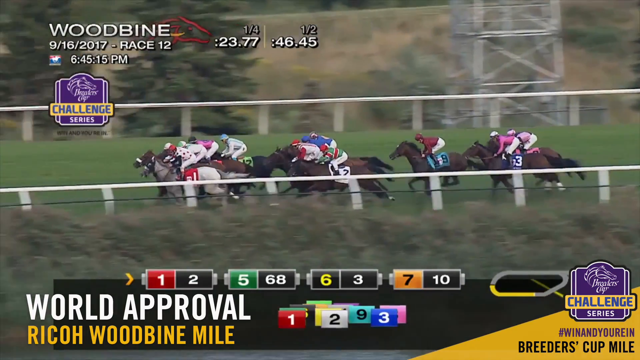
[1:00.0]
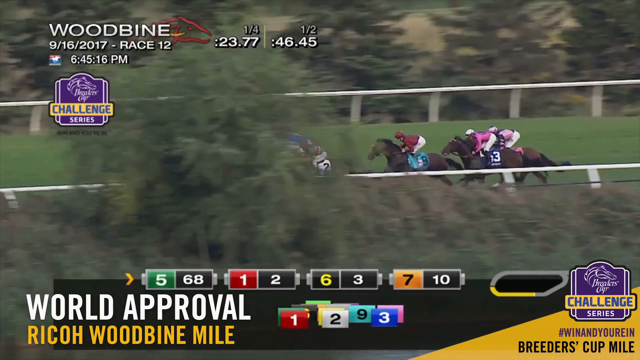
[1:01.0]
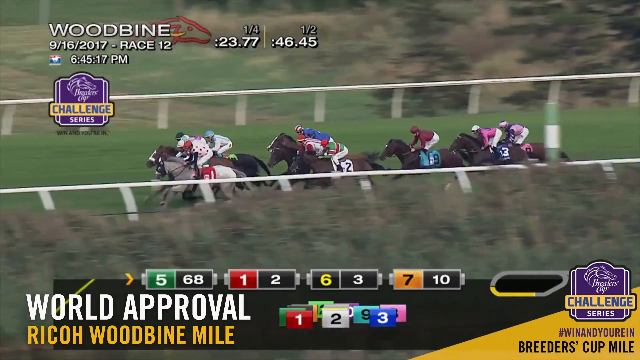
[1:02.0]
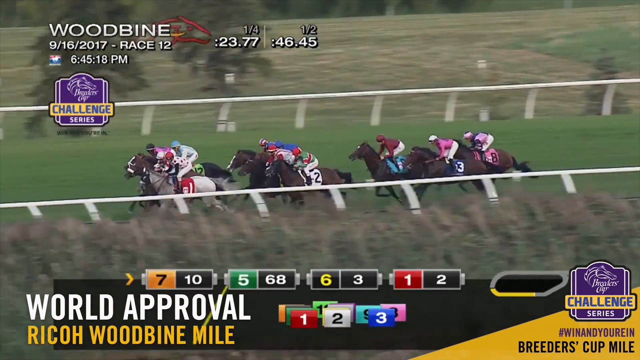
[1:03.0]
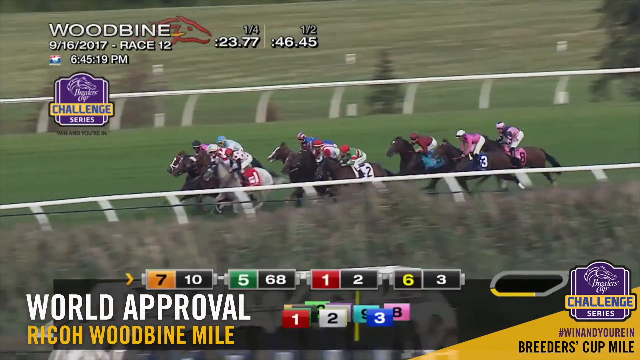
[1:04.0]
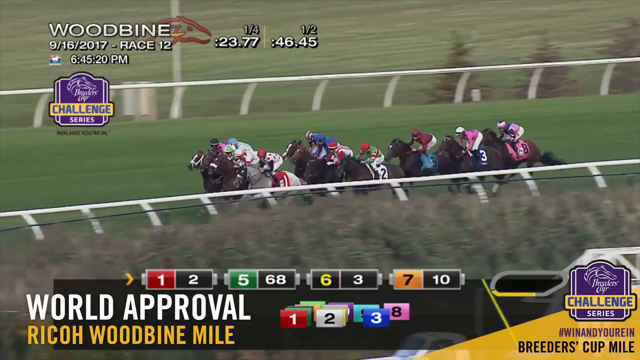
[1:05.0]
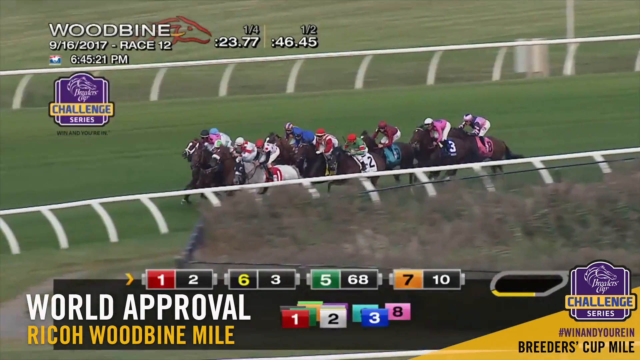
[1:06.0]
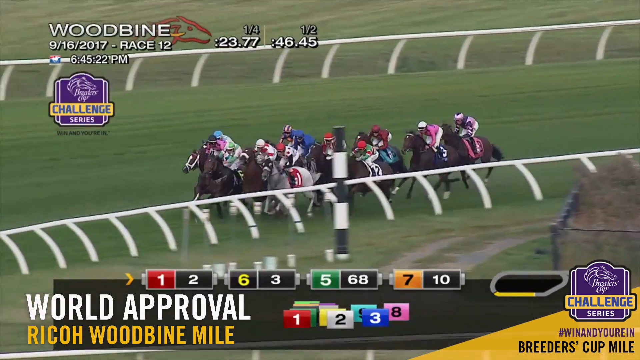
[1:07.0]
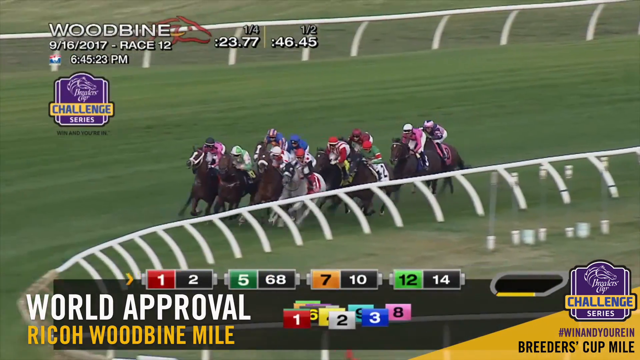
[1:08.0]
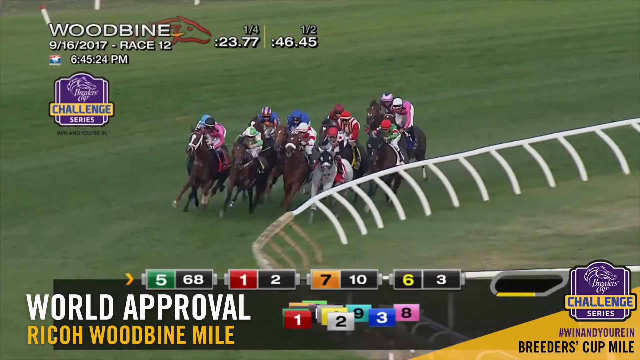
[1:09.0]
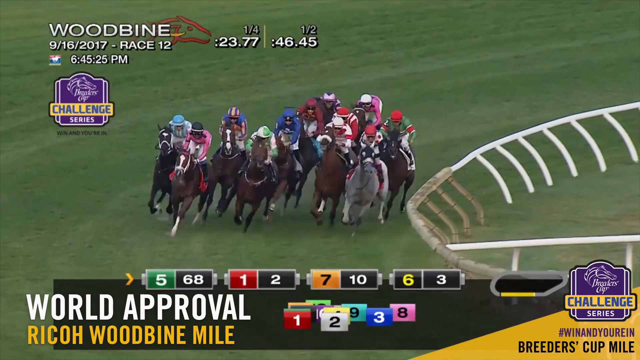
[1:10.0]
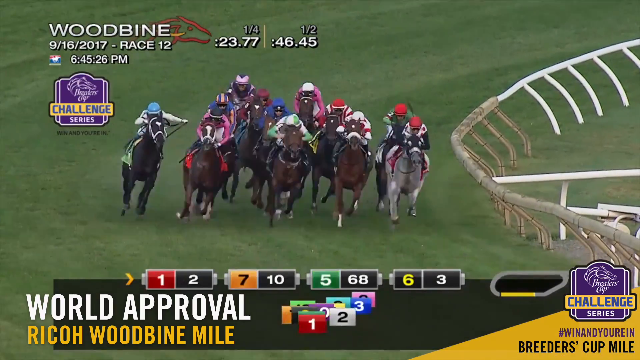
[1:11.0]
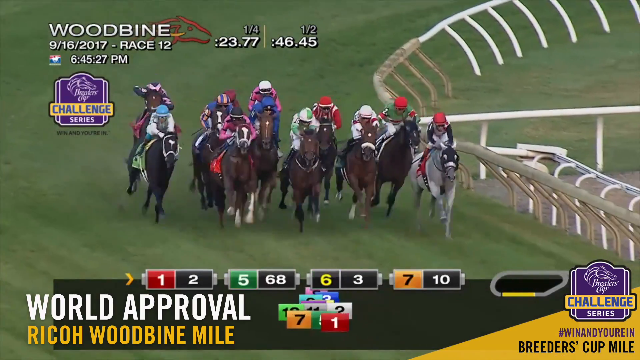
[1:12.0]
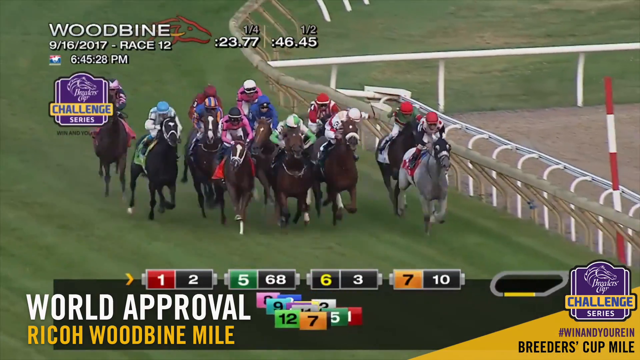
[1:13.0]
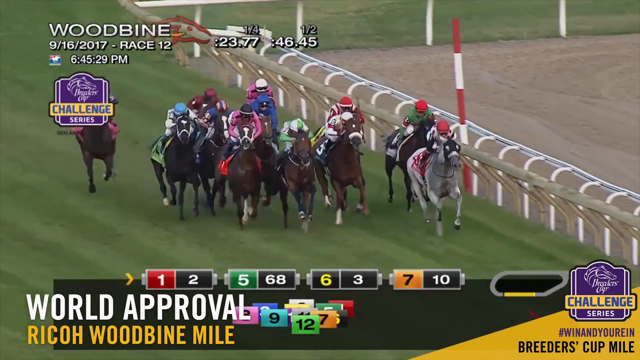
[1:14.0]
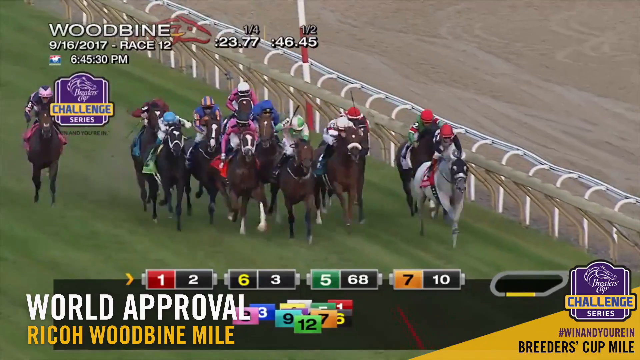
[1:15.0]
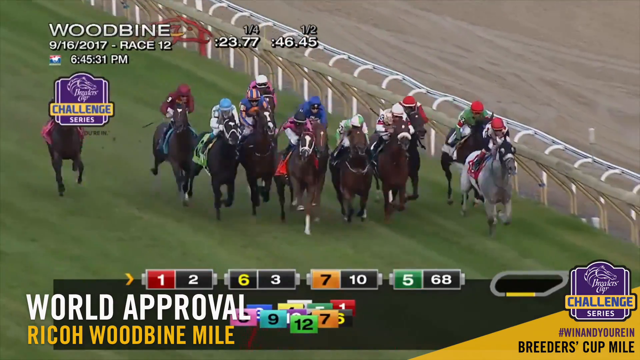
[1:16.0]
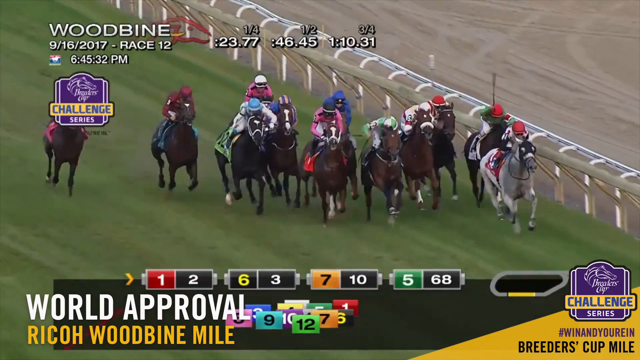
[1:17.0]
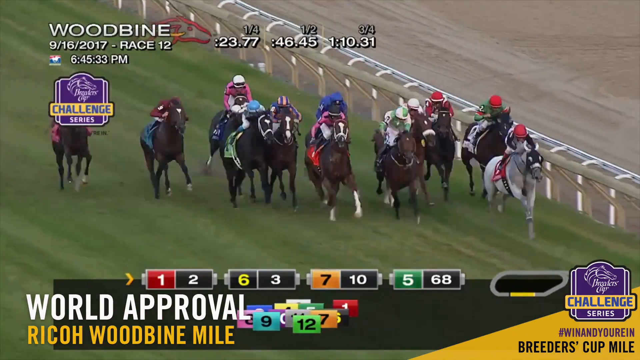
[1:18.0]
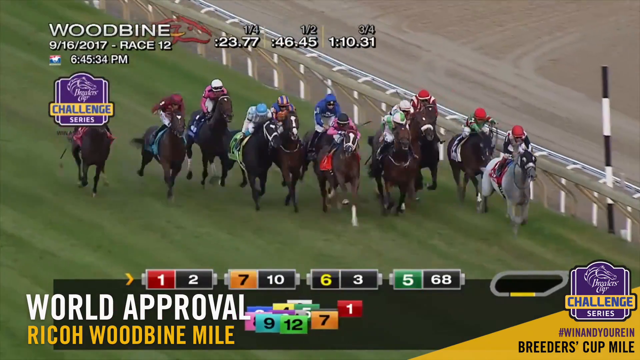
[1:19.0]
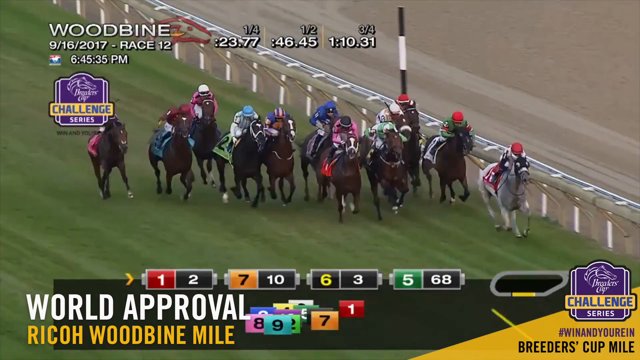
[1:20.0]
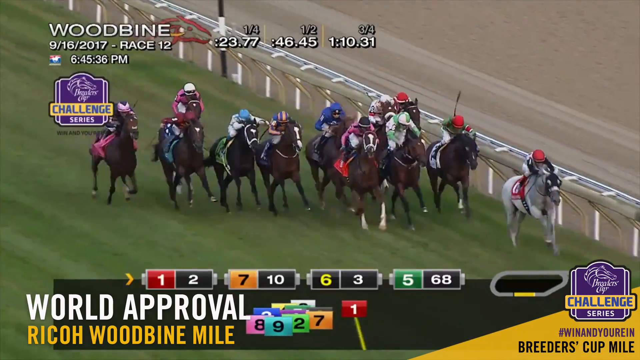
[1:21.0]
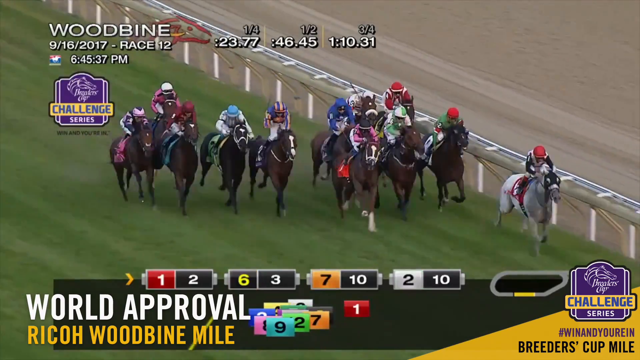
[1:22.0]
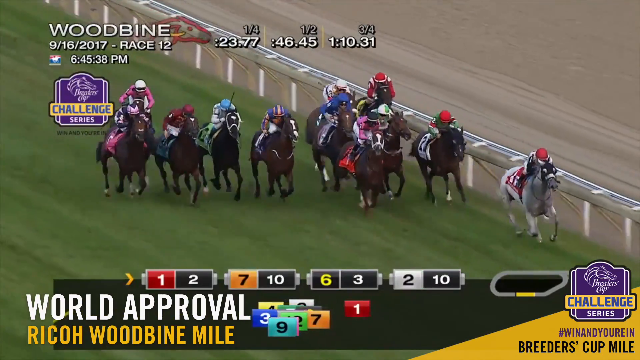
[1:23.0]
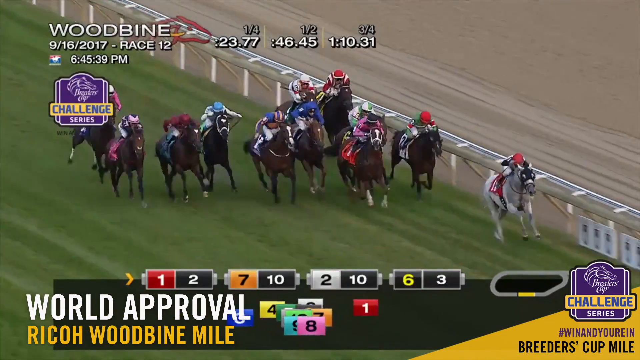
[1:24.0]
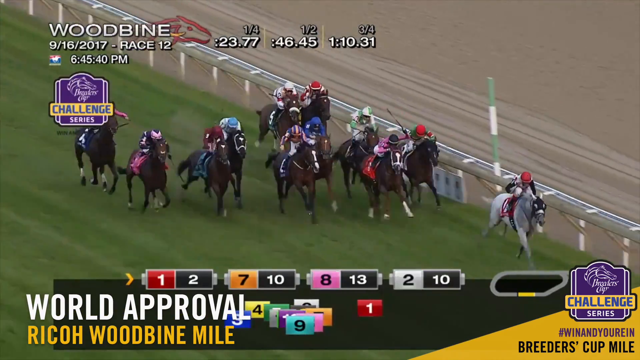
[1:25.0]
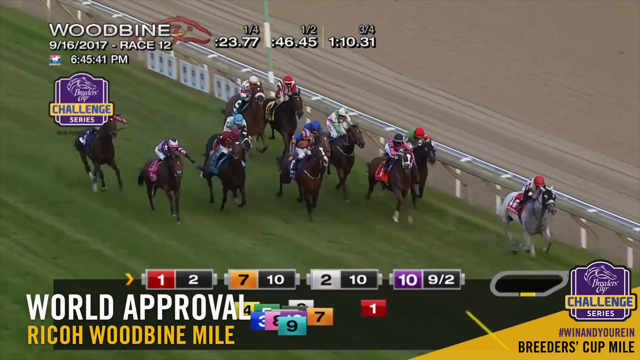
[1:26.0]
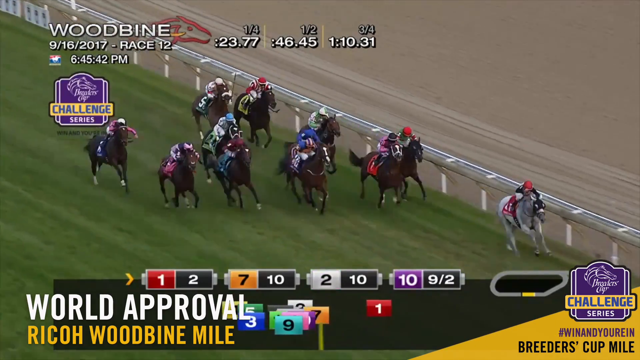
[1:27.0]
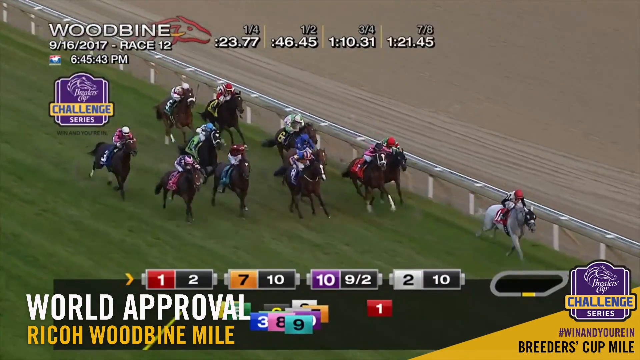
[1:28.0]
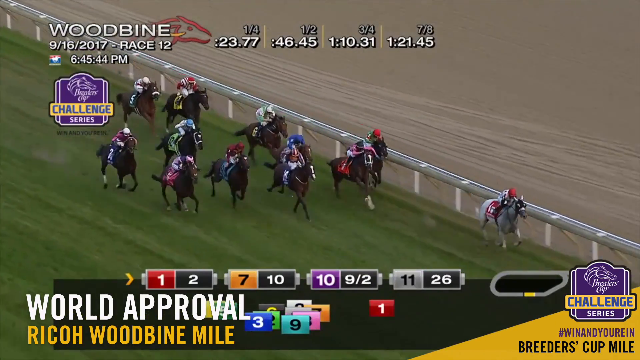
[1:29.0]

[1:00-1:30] The horses and jockeys are still riding in an anti-clockwise direction. Midway through, the viewpoint changes so that the horses and jockeys are riding towards the camera rather than horizontally across the screen, now heading towards the bottom right-hand corner. Many of the jockeys are hitting their horses with riding crops. Towards the end, the order seems somewhat strange. Number one still seems to be in the lead. The numbers at the bottom of the screen flip direction: previously the left-hand side showed the leaders, and now the right-hand side does. Number eight is still in last place; it briefly came back but has sort of dropped down again. Number one has been tied or in first place for most of the race.